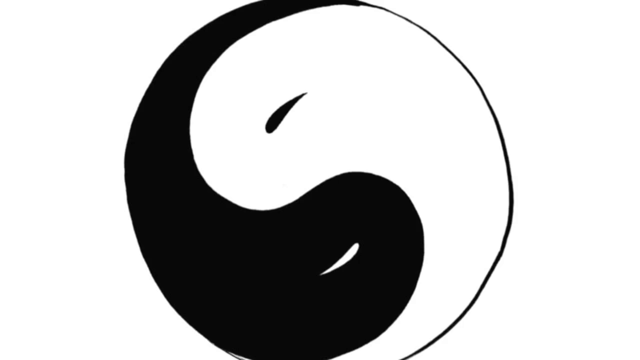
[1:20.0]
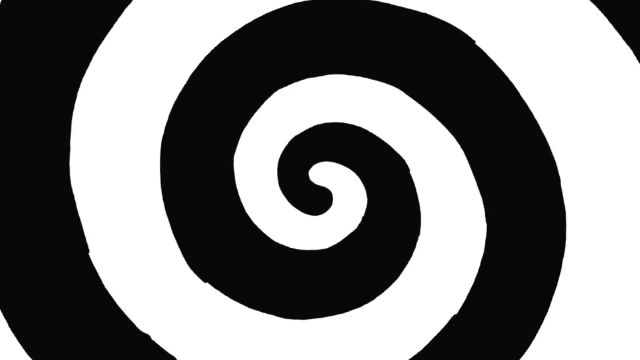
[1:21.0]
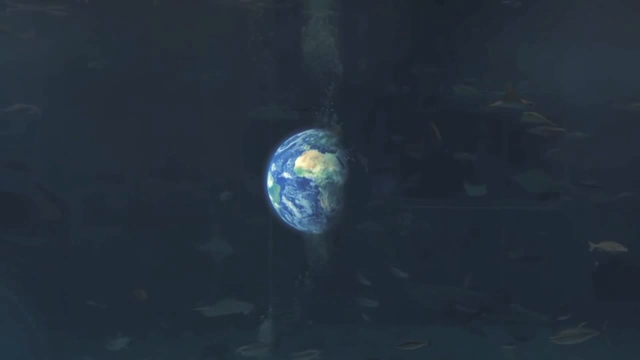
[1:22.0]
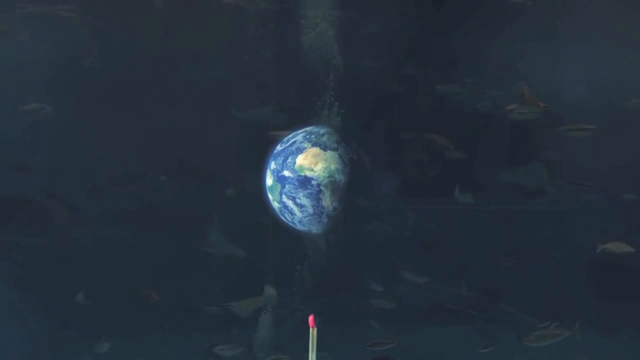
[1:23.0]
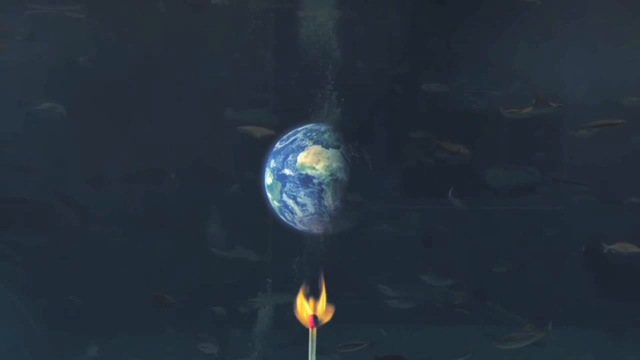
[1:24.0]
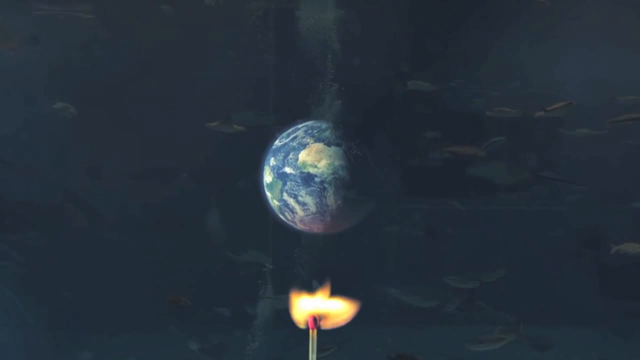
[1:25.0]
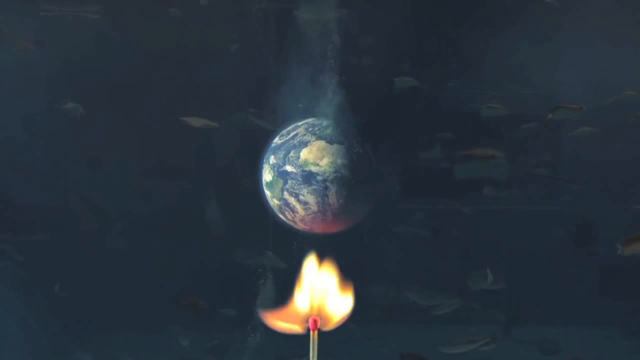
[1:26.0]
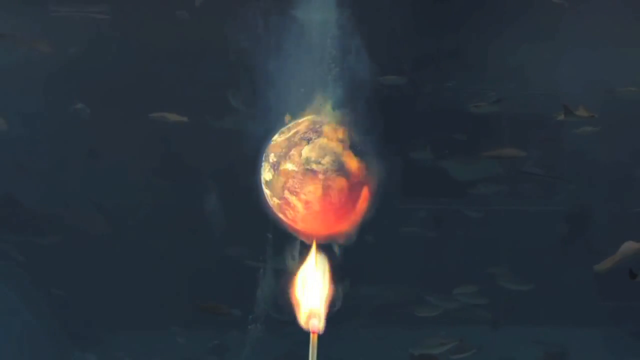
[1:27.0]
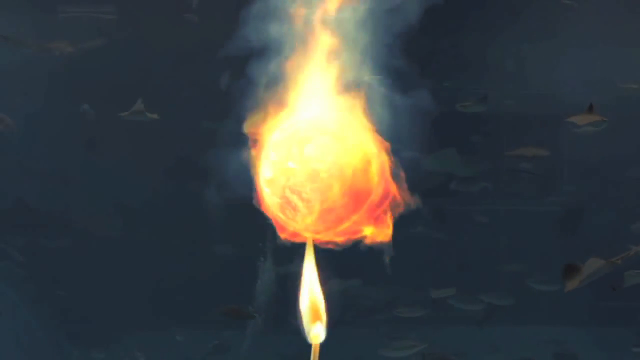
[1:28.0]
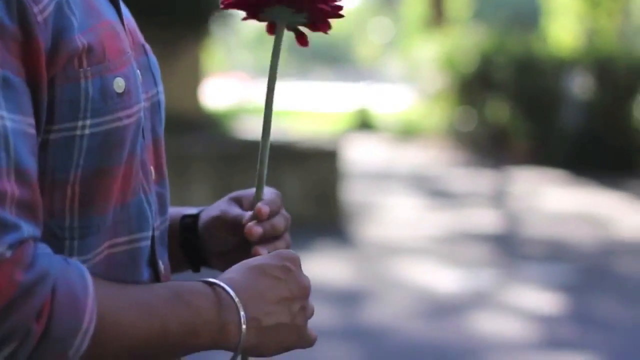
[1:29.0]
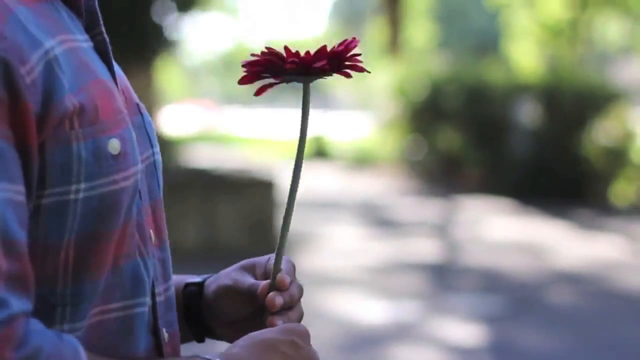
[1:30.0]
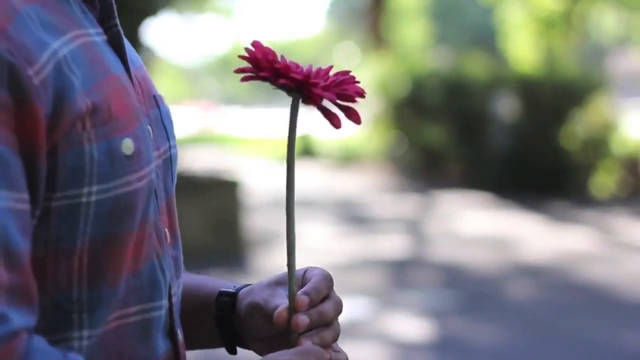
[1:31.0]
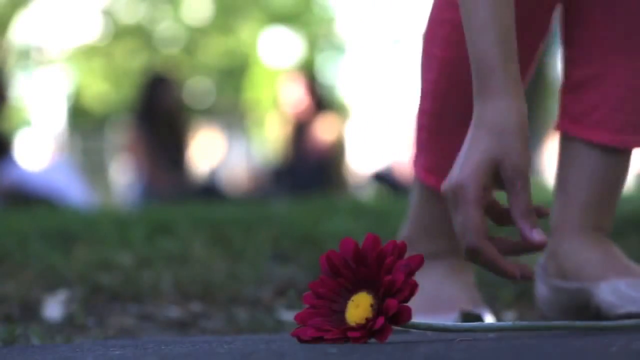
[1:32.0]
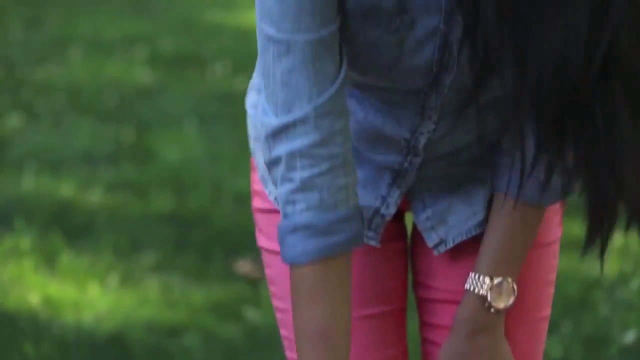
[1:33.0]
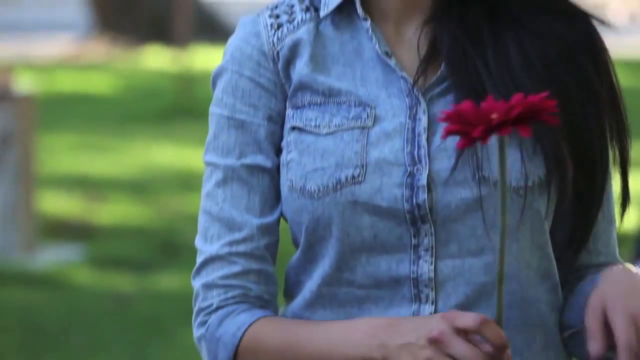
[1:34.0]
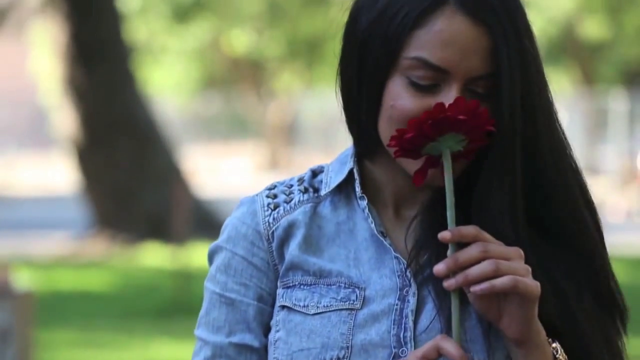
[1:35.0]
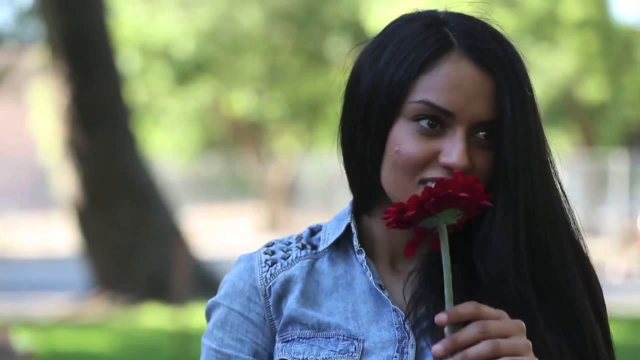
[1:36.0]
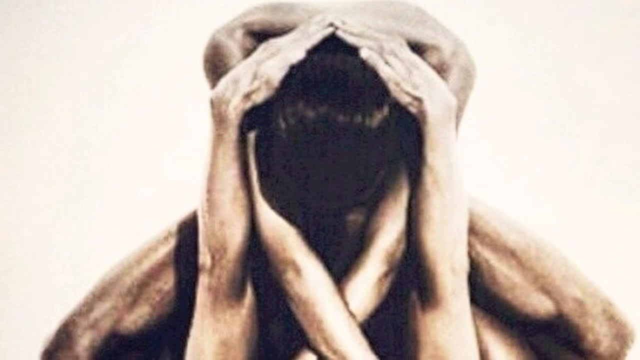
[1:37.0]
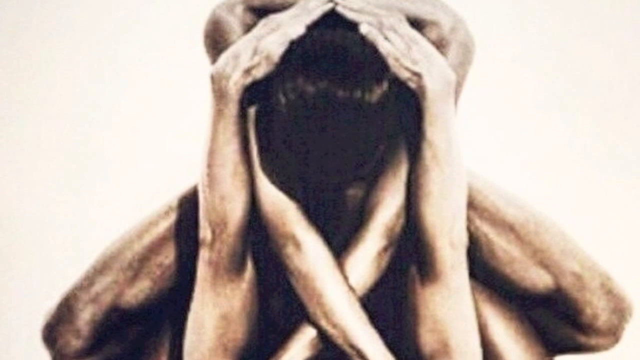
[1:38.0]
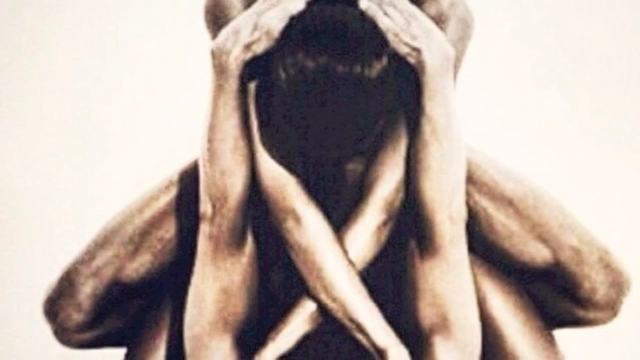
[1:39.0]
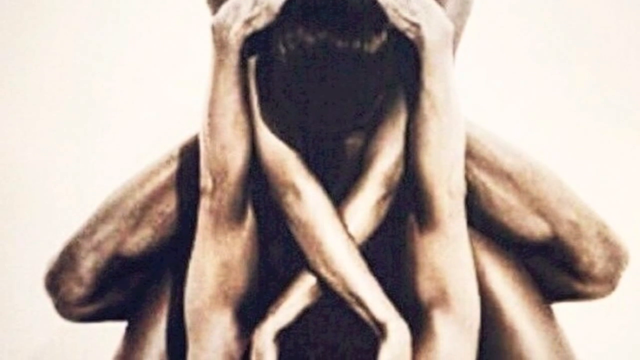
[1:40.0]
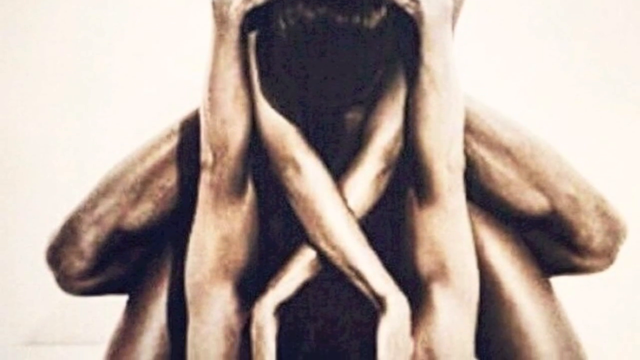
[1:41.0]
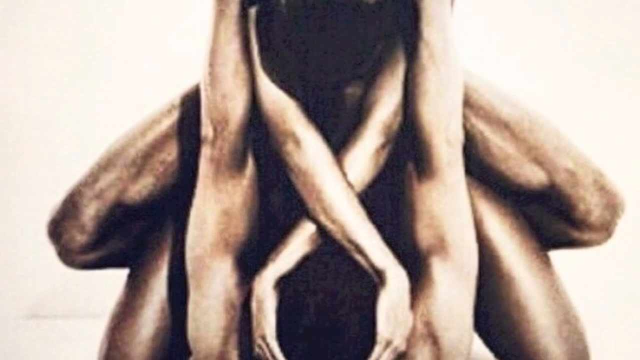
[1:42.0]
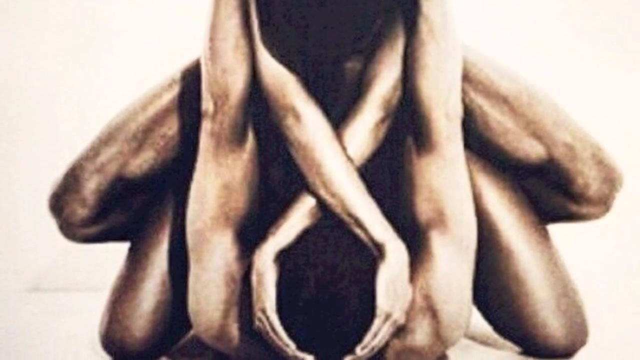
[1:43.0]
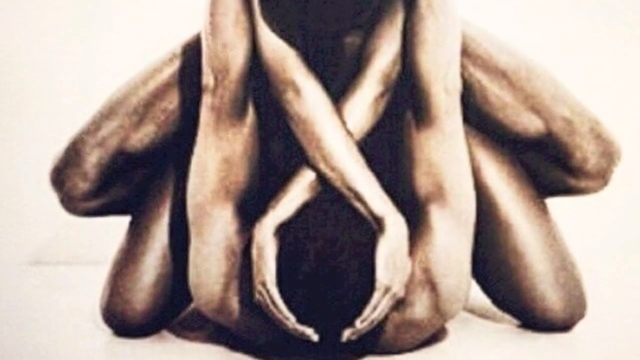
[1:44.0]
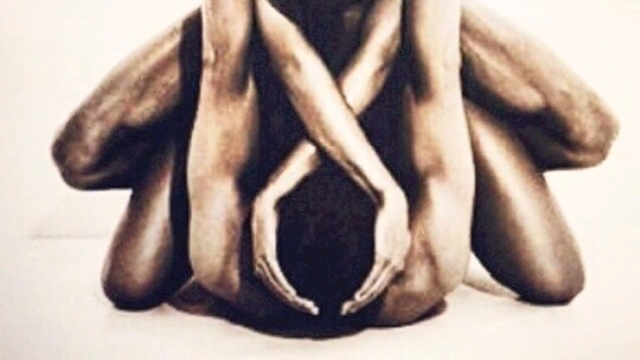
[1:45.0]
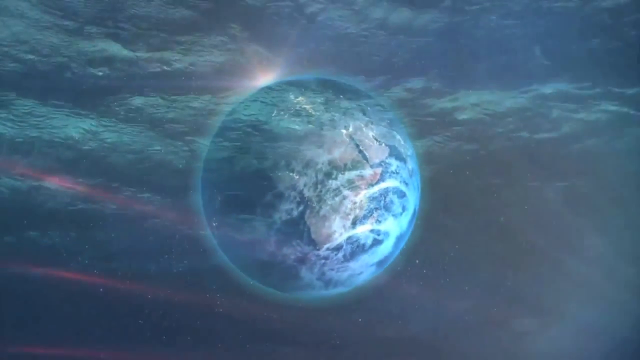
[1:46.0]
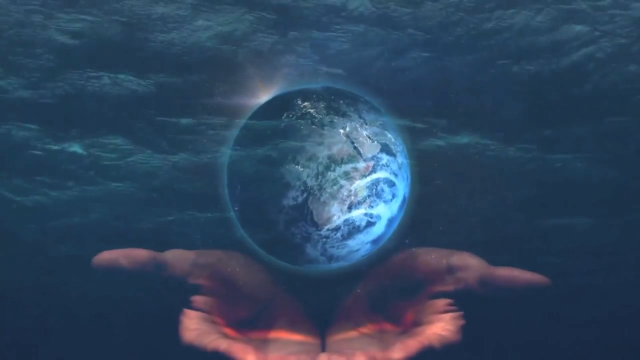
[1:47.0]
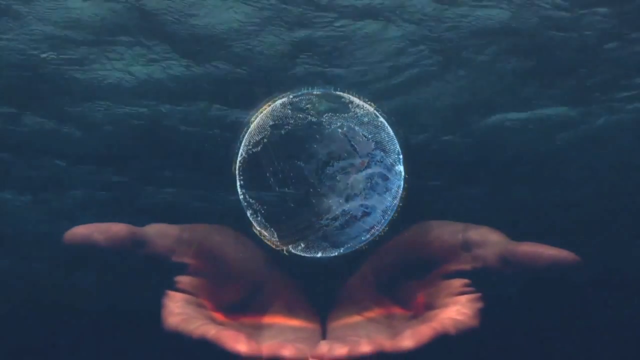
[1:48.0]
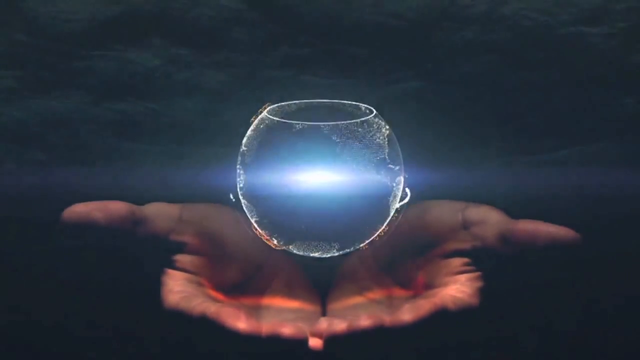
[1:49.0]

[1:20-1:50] A yin-yang with black and white sides appears. A symbol of a female appears on the black side and a symbol of a male on the white side. Then the image splits into two separate sides: the top side shows an angel and the bottom side shows the devil. The two animated figures flap their wings, the bottom one depicted as the devil with bat wings and the top one as God with angel wings.